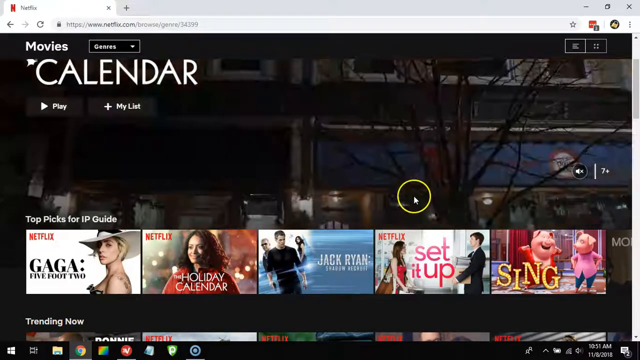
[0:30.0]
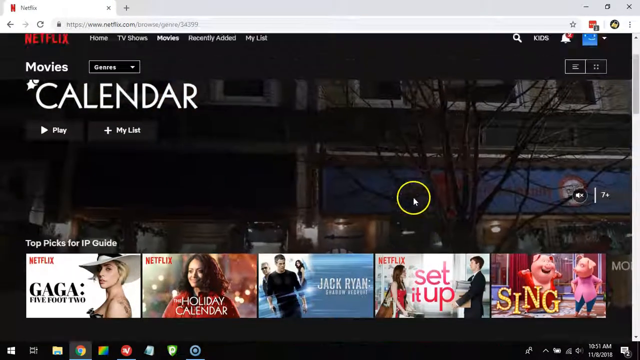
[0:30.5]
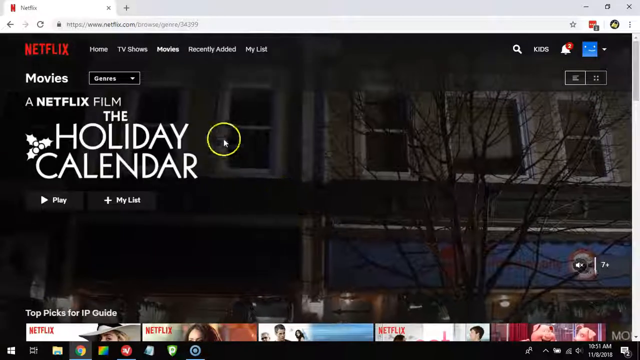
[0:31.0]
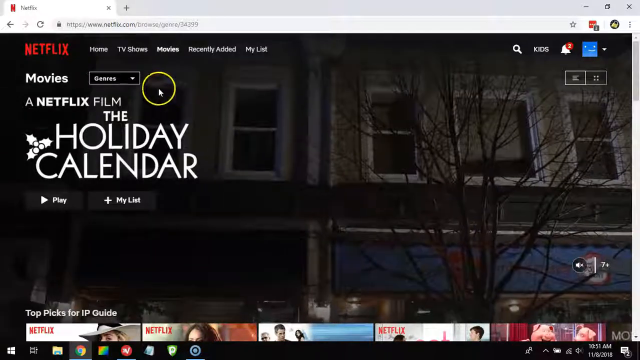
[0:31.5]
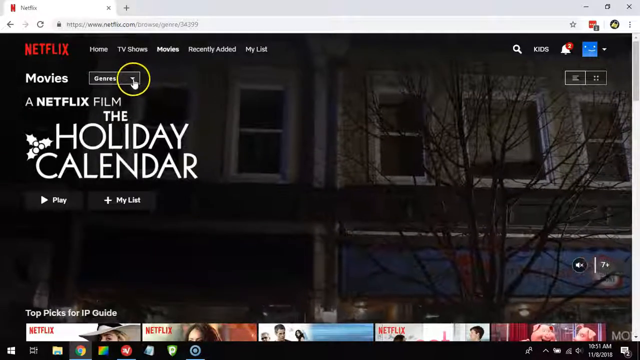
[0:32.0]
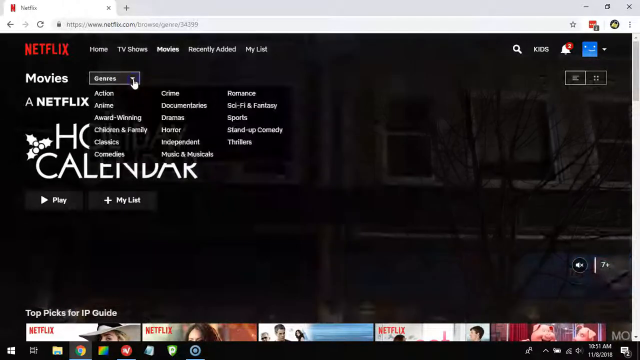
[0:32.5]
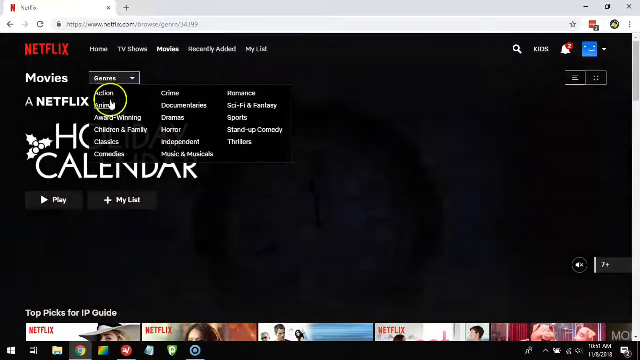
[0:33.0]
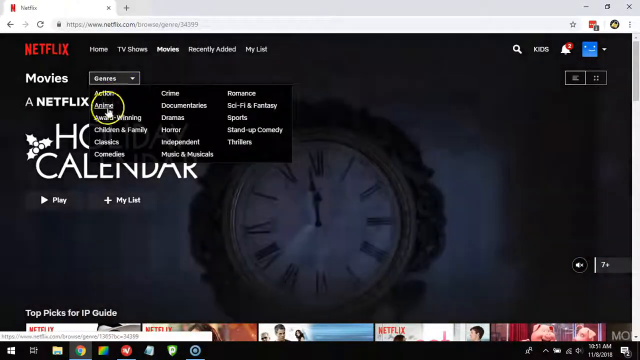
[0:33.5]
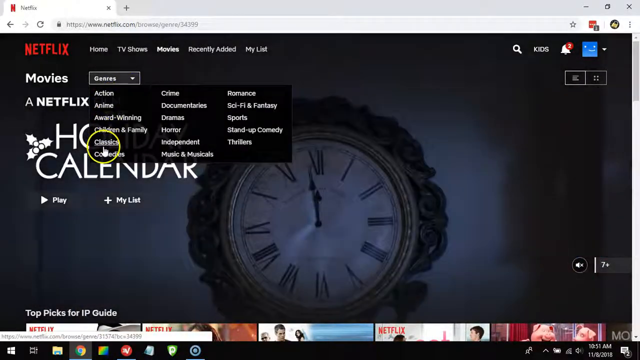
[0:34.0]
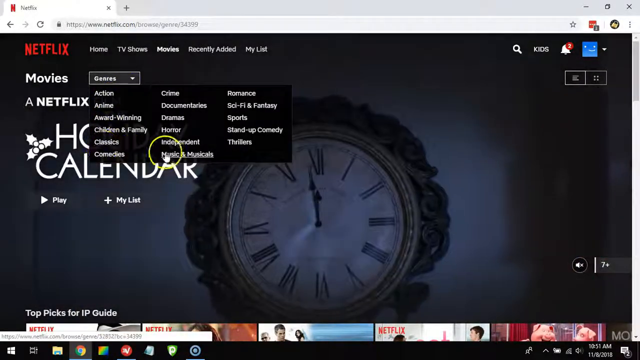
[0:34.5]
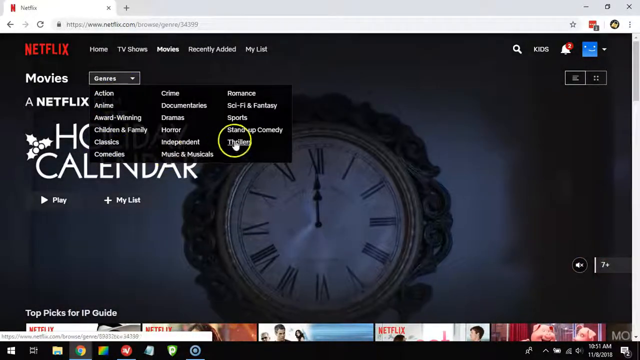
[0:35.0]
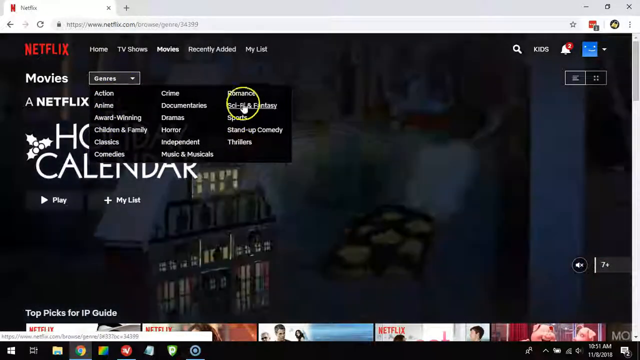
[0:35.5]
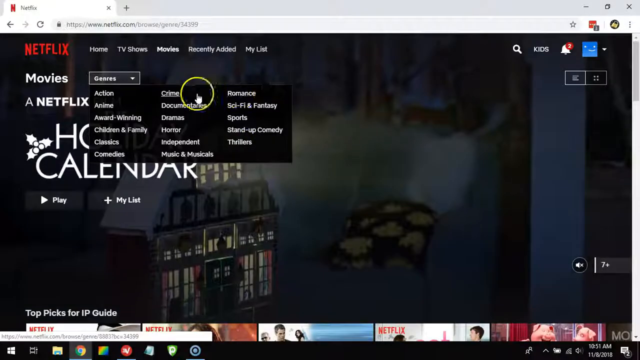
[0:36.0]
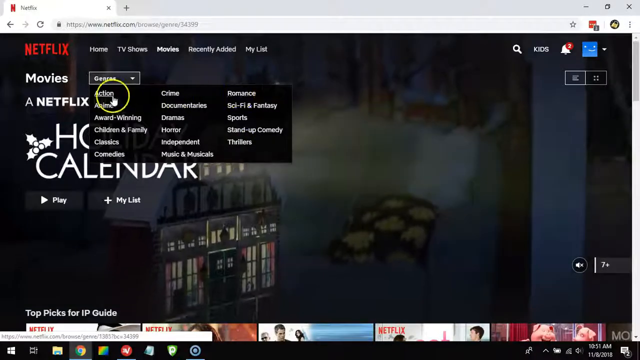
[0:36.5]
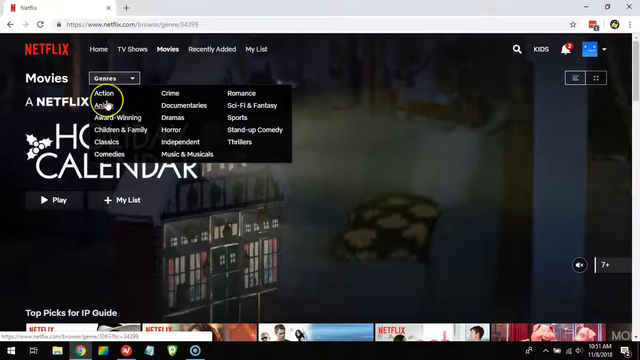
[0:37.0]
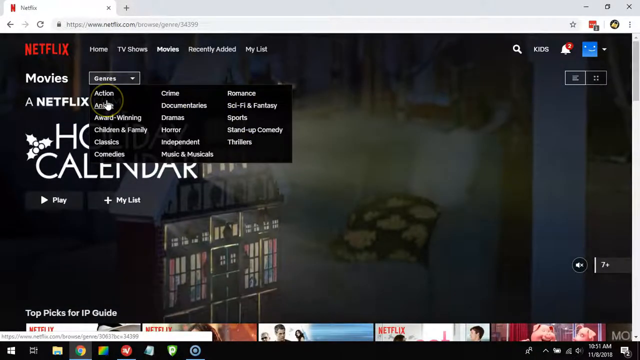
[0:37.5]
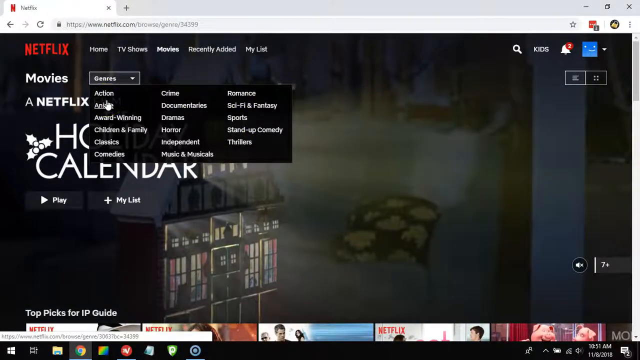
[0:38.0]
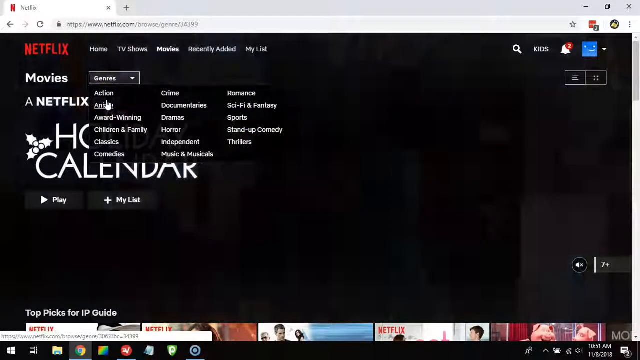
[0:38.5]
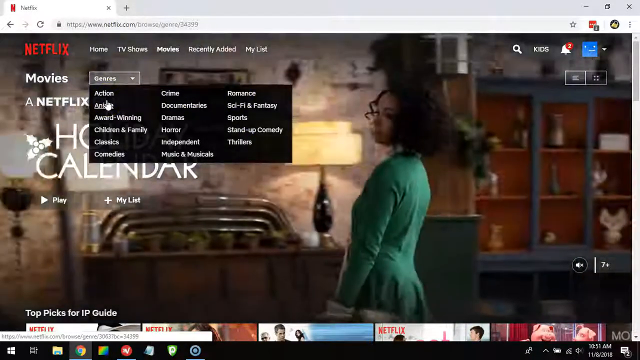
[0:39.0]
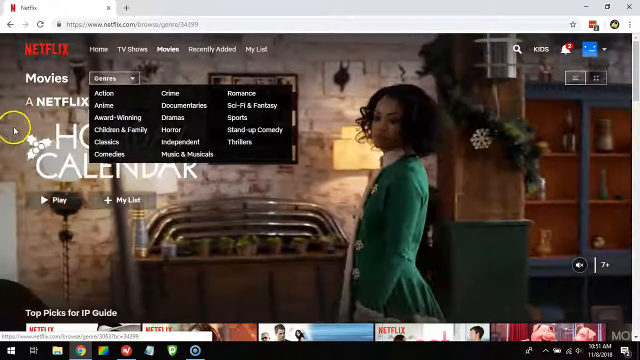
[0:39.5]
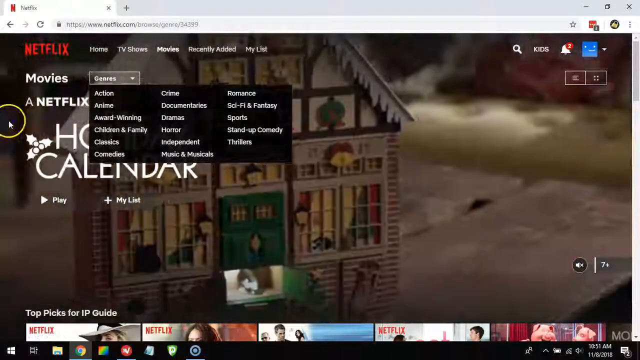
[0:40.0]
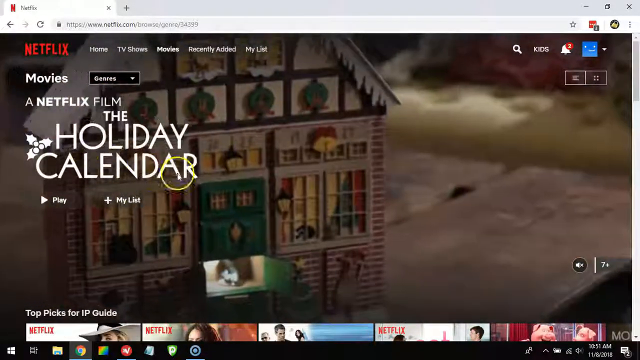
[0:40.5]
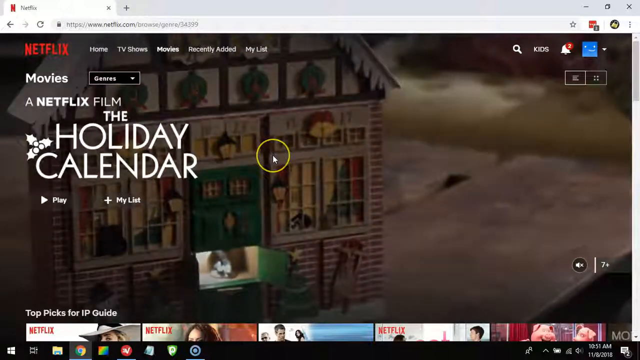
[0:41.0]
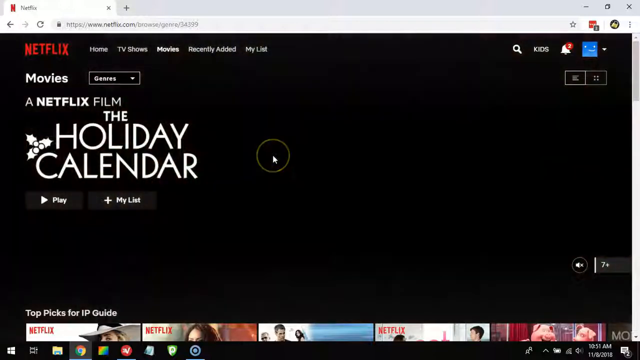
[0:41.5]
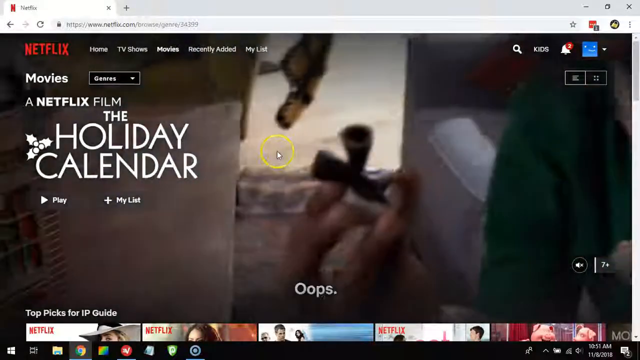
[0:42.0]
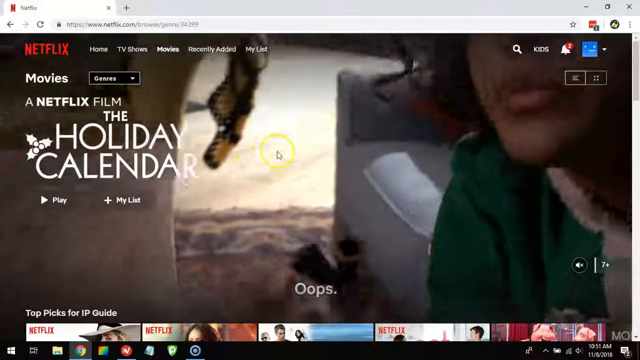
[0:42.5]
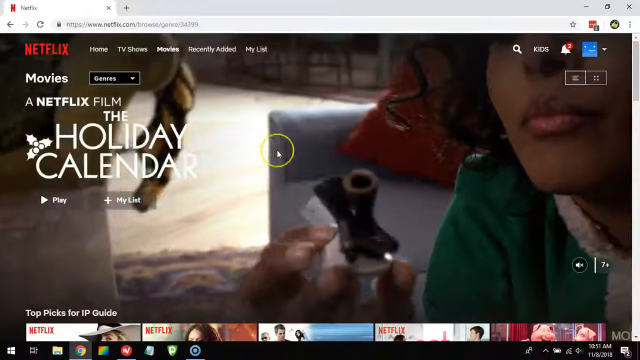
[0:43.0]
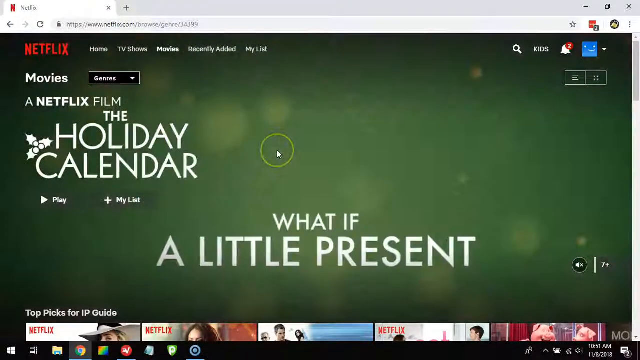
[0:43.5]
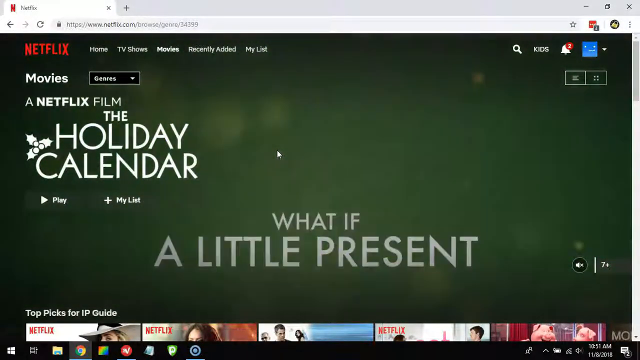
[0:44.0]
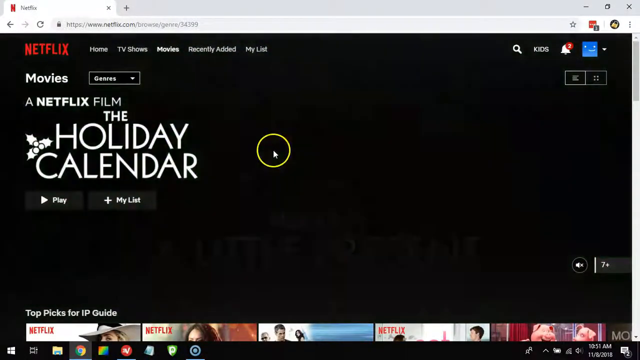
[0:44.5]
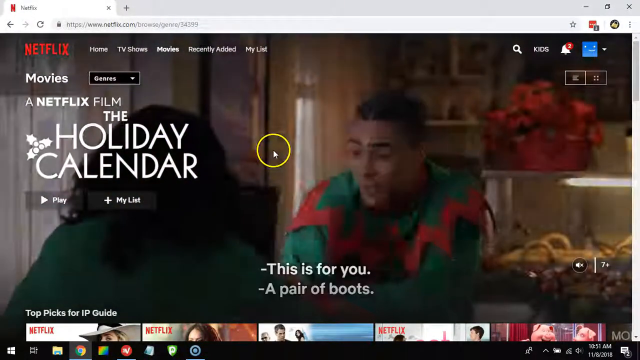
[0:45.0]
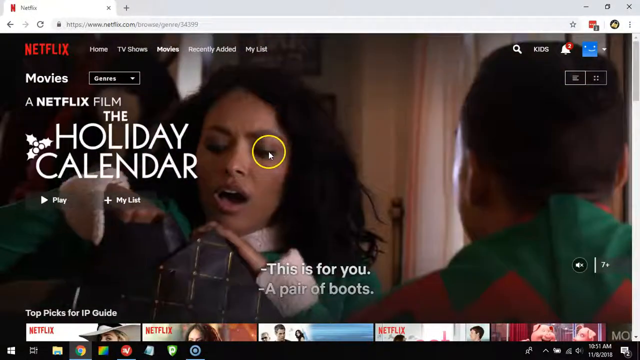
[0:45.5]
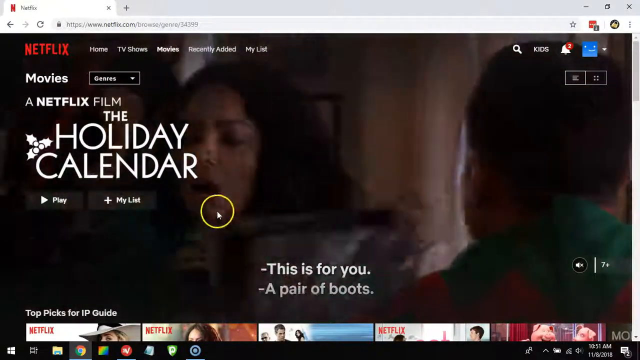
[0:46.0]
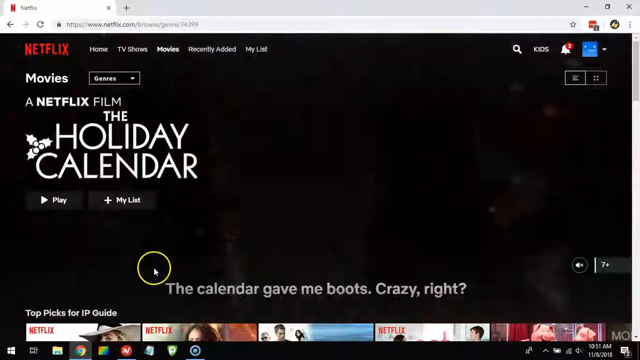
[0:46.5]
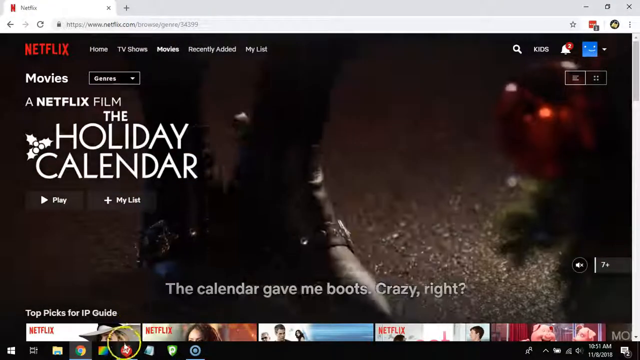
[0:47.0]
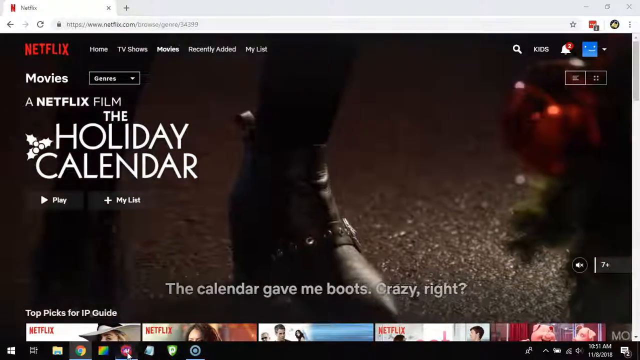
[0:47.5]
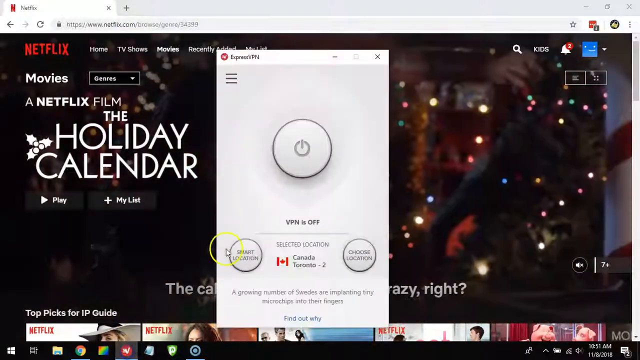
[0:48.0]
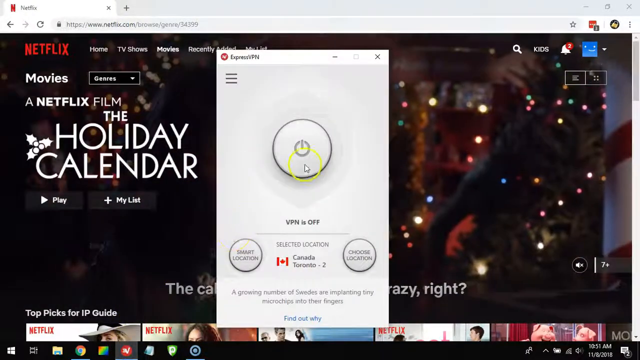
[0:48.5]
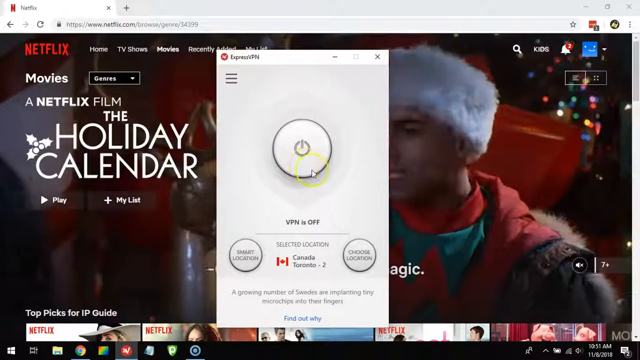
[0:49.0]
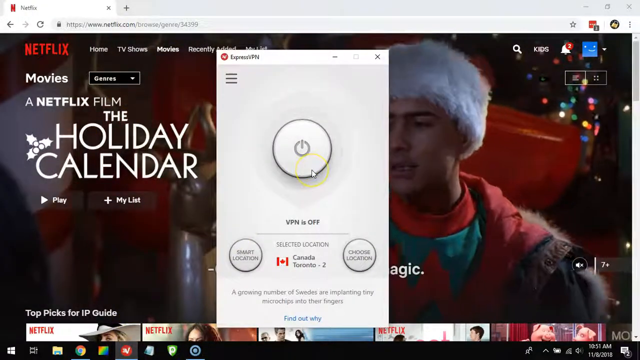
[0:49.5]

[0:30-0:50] The cursor, which has a yellow circle around it, moves up and pulls down the genre menu, listing categories such as action, crime, romance, horror, drama and classics. Nothing is selected. The trailer for The Holiday Calendar, a Netflix film, keeps playing in the background. Express VPN is then opened and a small box appears, with the selected location set to Canada, Toronto. At the top right of the page are a search option and notifications.